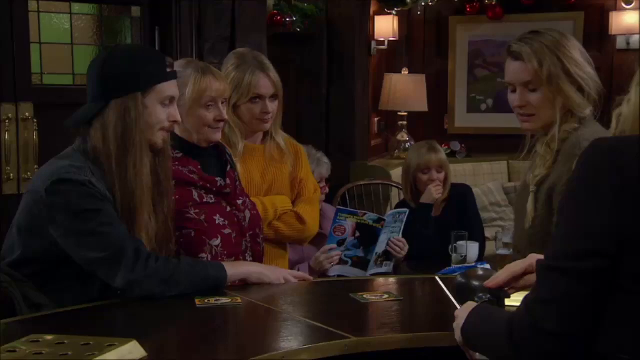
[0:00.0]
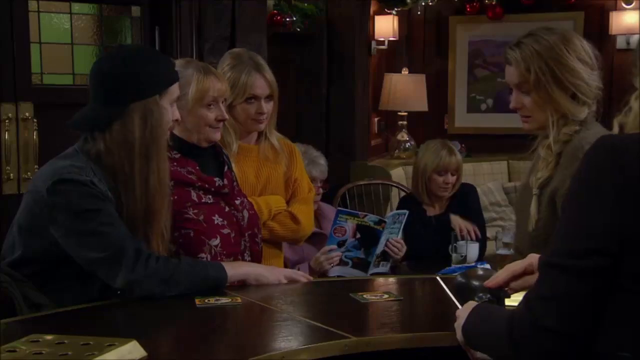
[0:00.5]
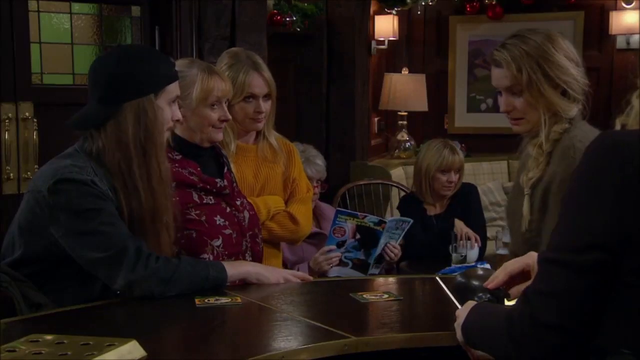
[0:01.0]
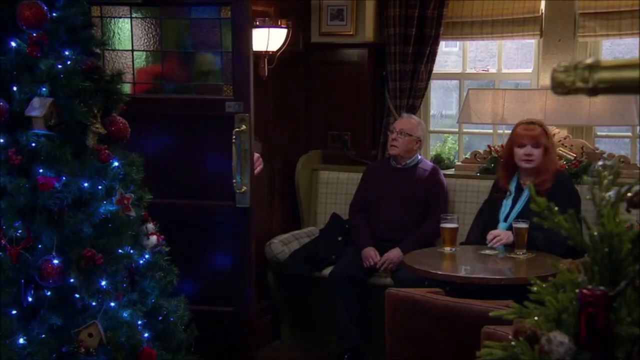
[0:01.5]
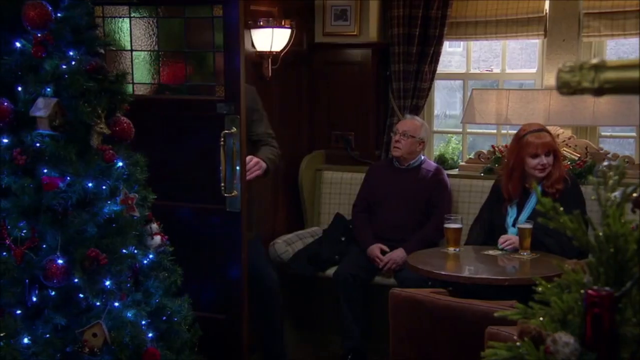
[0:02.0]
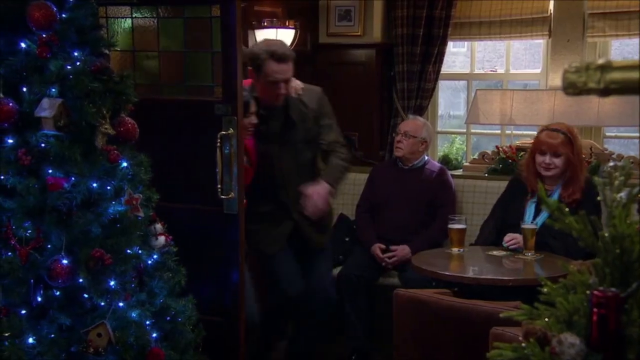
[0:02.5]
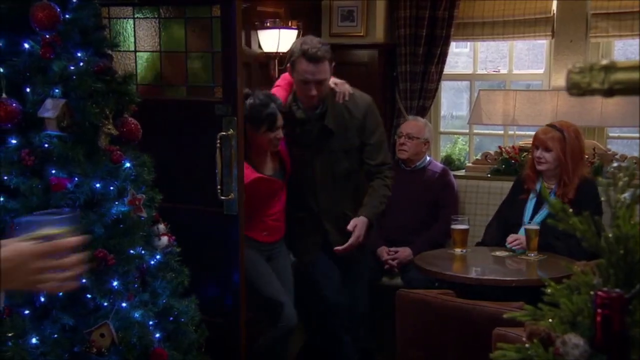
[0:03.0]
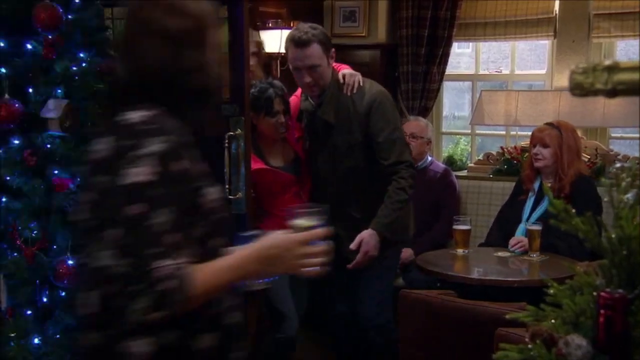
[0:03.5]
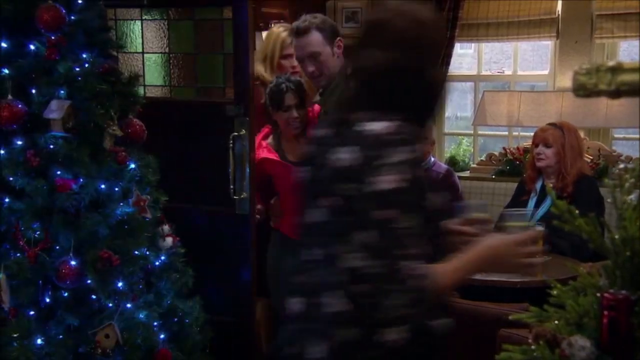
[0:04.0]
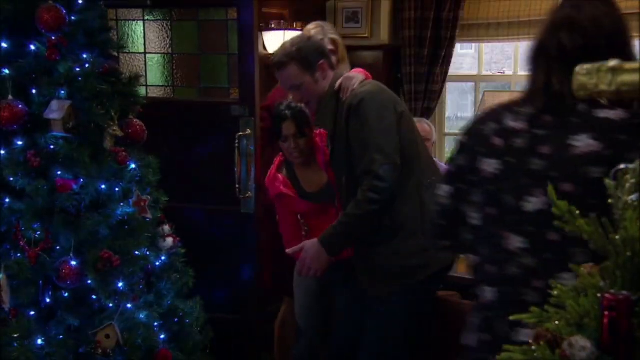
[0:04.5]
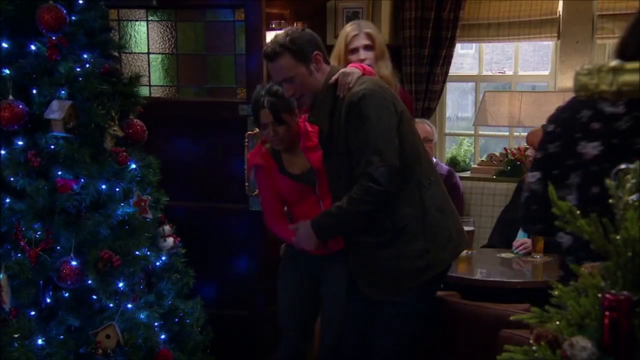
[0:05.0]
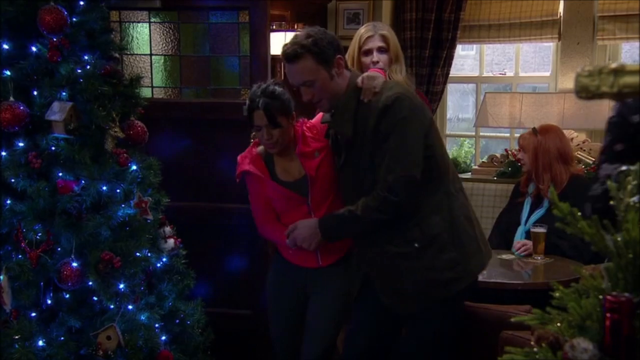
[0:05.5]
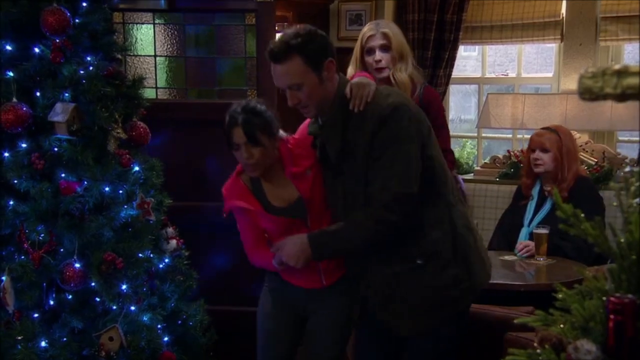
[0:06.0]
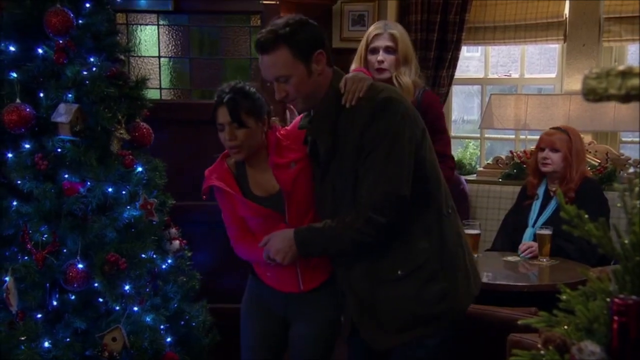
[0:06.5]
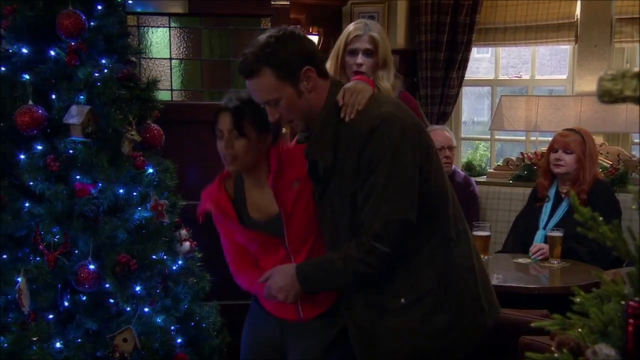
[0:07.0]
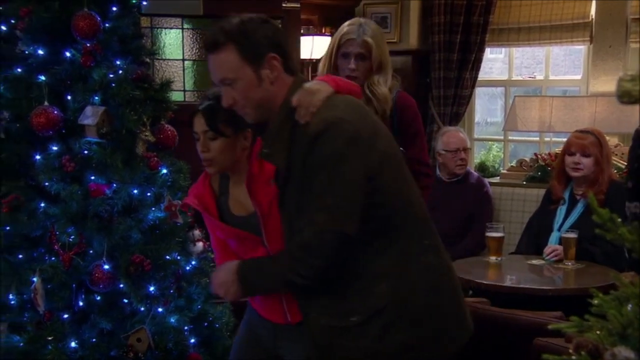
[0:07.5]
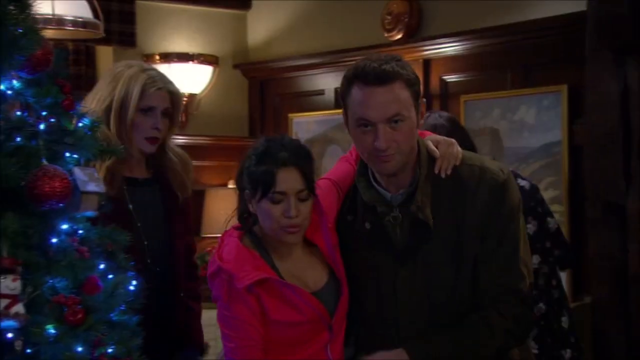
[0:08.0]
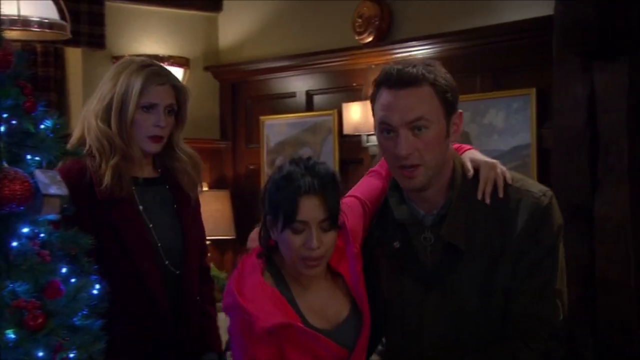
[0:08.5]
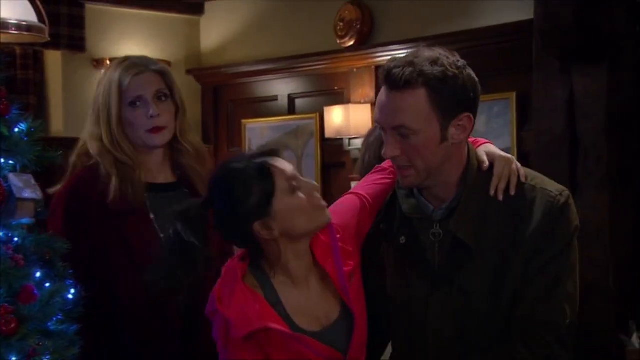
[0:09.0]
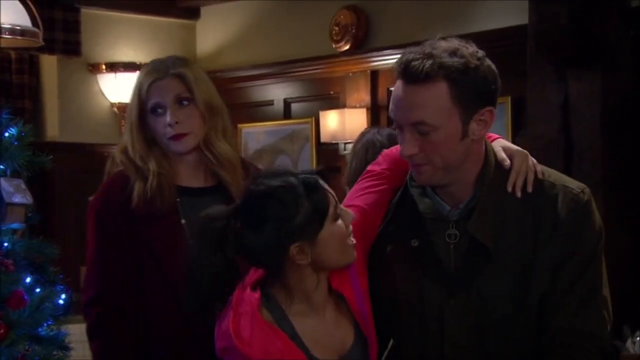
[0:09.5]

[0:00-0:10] The video appears to be possibly a network sitcom television show. It opens in what looks like maybe a bar or restaurant setting, with four people at a table in the main frame. One is an older lady with blonde hair in a braid. Another is a younger woman who does not look happy; her arms are crossed, she wears a yellow shirt, and she is looking at something. There is also an older blonde lady carrying a little extra weight, wearing a funky-patterned red sweatshirt with a black scarf and looking off somewhere. To her left is a man with very long hair, a black baseball cap, facial hair on his chin and a mustache, and a long-sleeved black shirt; his arm is kind of crossed. In the background, a lady in a chair and another person look like background actors talking to each other; one is holding a pepper, and the other looks like they might be eating or drinking something. The shot switches back, and a Christmas tree shows it is Christmas time. It is definitely a bar, since people all have drinks. An older couple sits at a table near the door, watching three people walk in, and a lady walks by with glasses of beer. The three are a young white couple, a man and a woman, and an older woman. The man is kind of wearing a nice shirt and pants. The woman wears a red sweatshirt with a black top and jeans, and her black hair is pulled up. She looks injured, maybe in her ankle or leg, and she is being held onto and helped to walk. Behind them, an older lady with long blonde hair, wearing a red jacket and a black top, seems annoyed and unhappy with the situation.